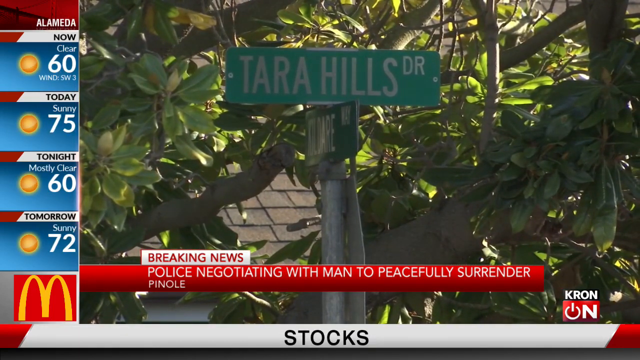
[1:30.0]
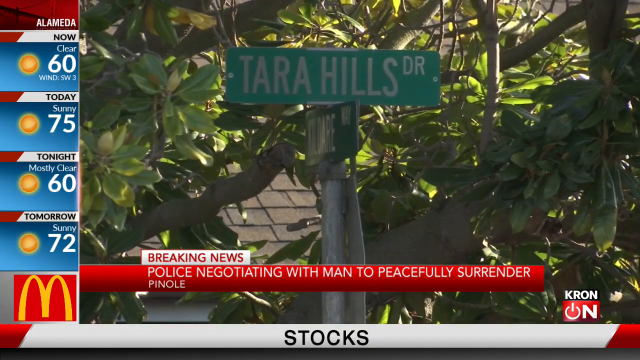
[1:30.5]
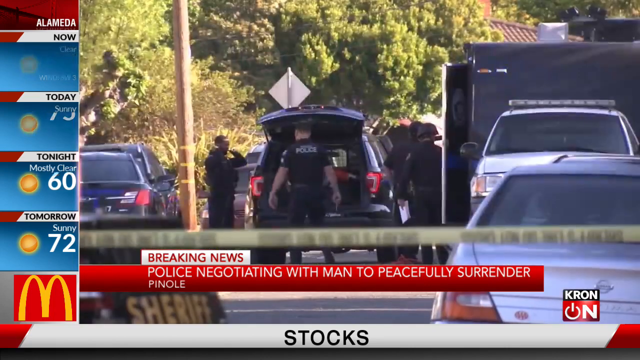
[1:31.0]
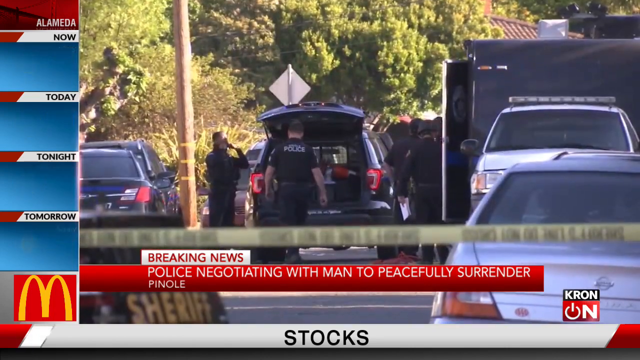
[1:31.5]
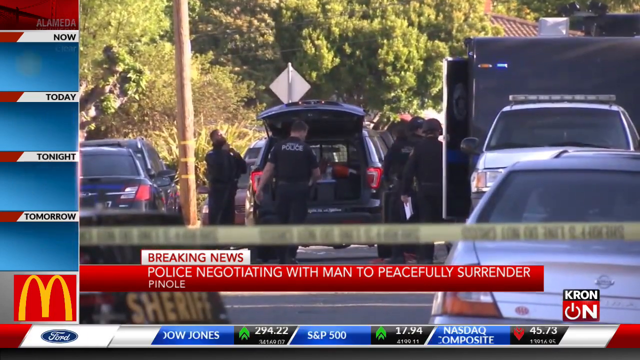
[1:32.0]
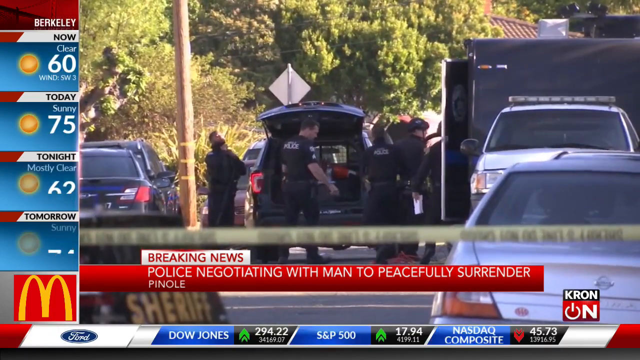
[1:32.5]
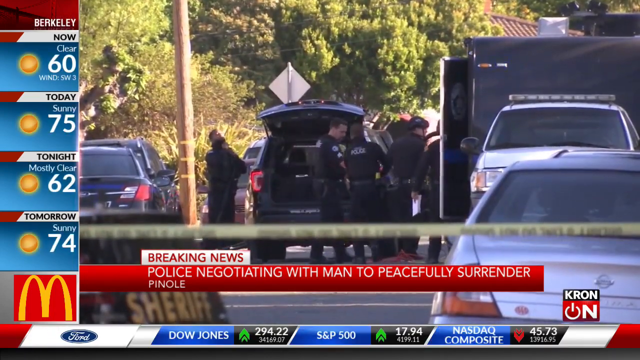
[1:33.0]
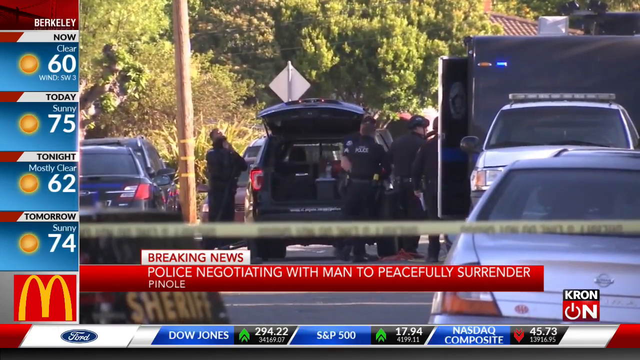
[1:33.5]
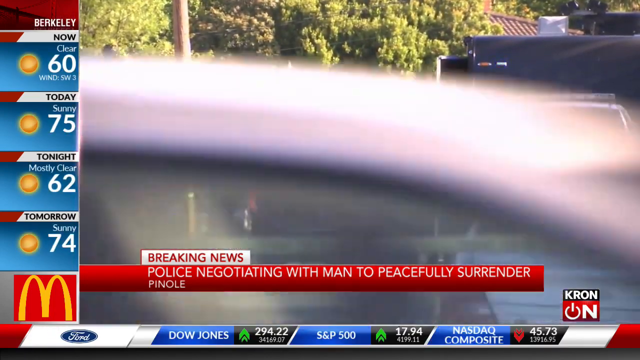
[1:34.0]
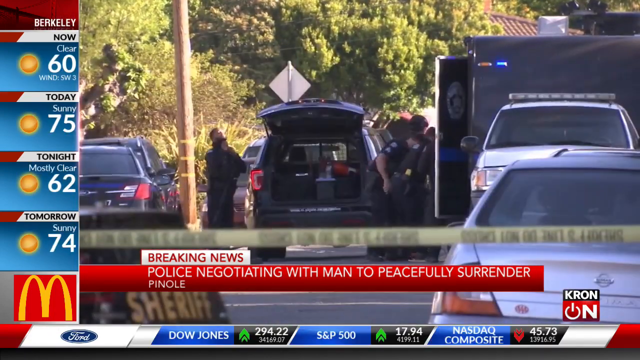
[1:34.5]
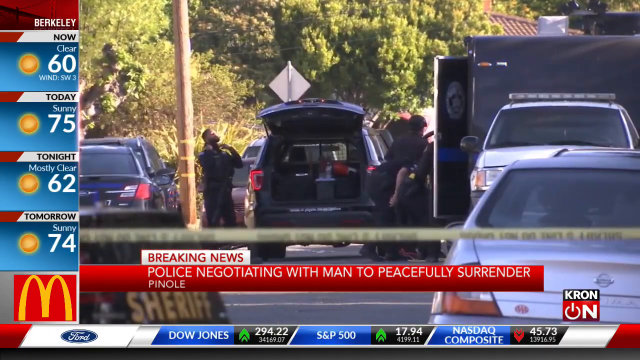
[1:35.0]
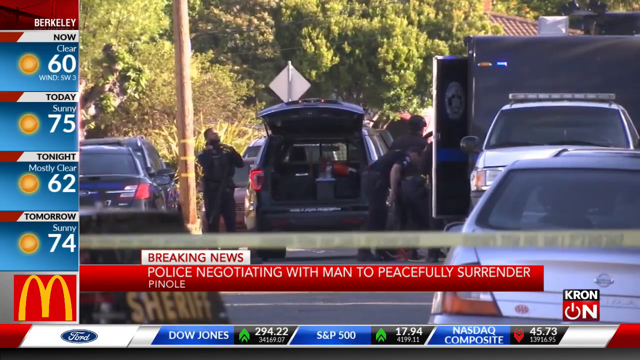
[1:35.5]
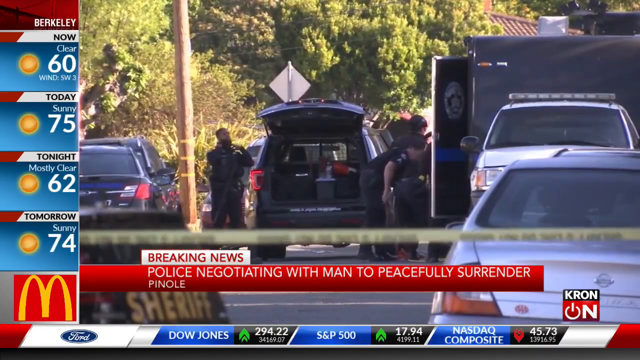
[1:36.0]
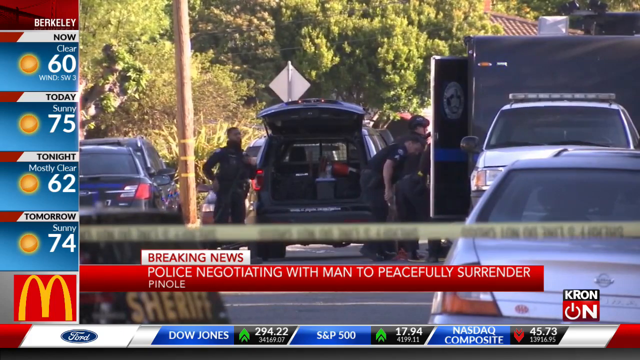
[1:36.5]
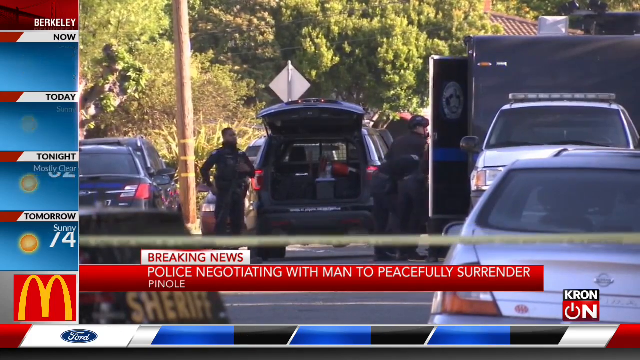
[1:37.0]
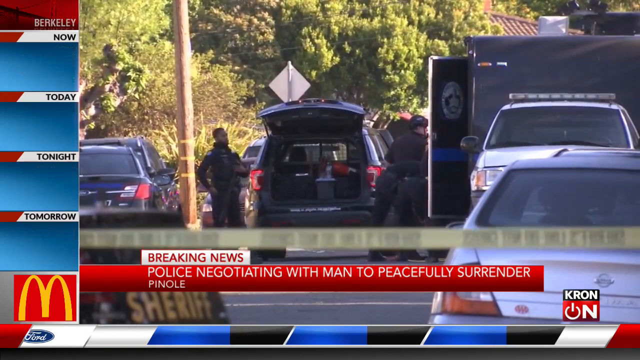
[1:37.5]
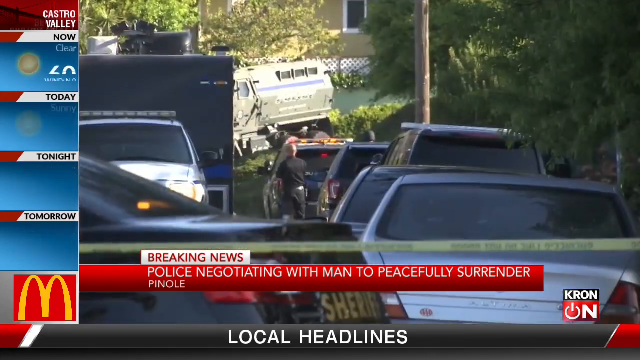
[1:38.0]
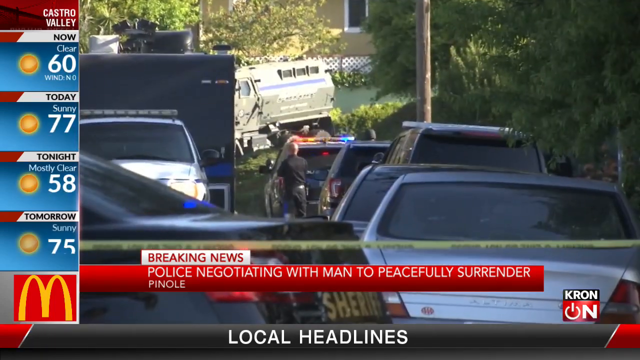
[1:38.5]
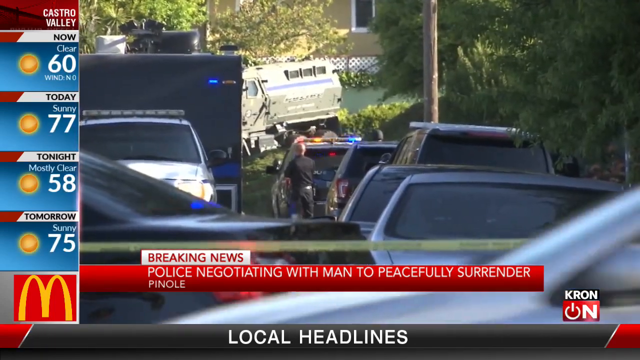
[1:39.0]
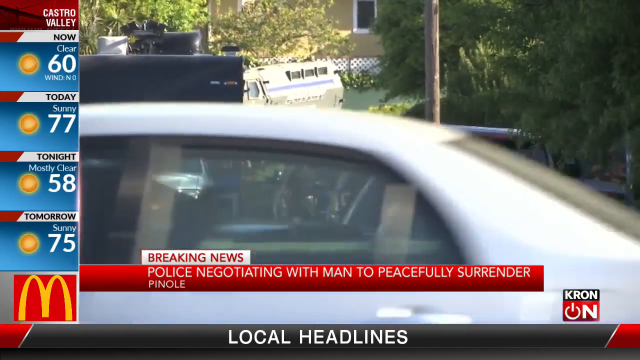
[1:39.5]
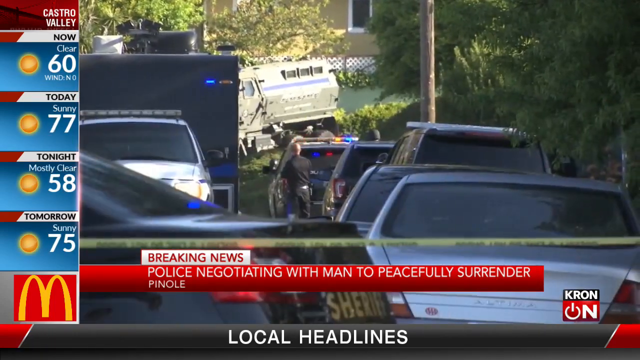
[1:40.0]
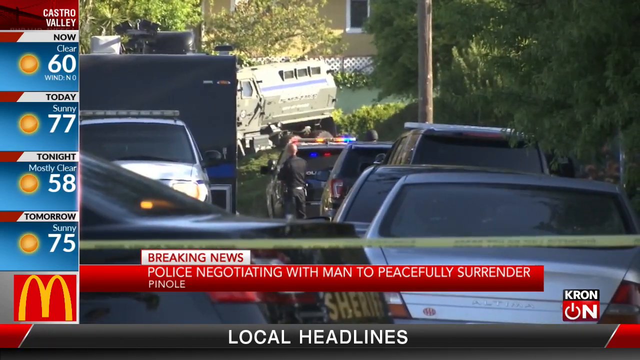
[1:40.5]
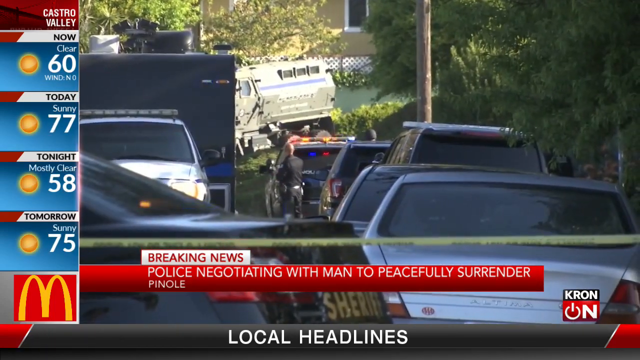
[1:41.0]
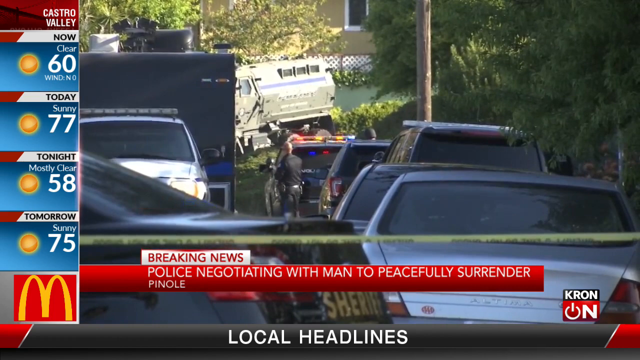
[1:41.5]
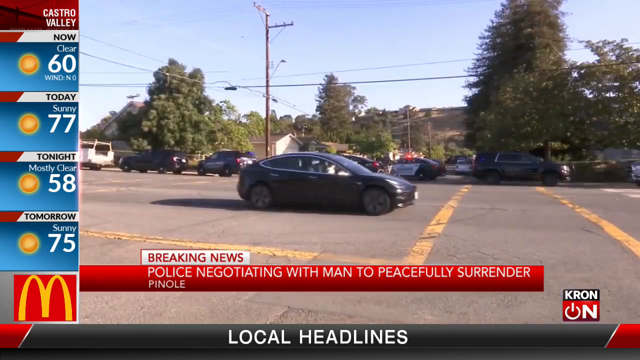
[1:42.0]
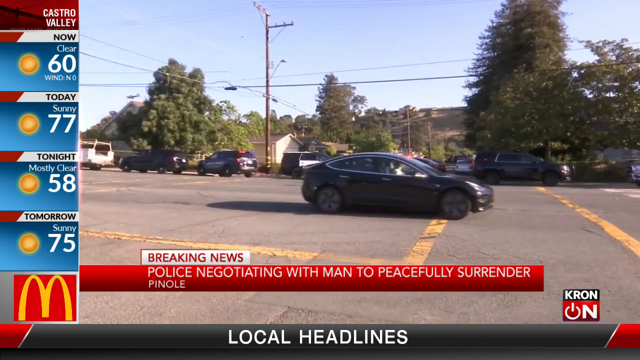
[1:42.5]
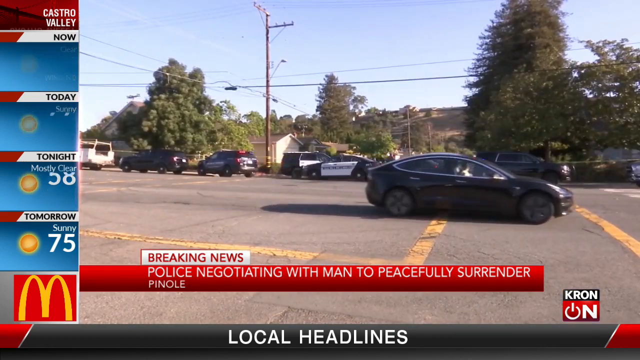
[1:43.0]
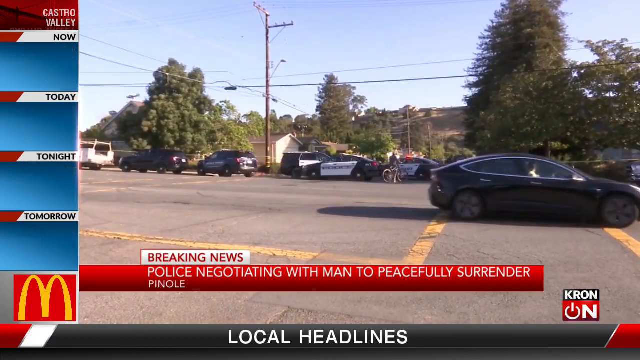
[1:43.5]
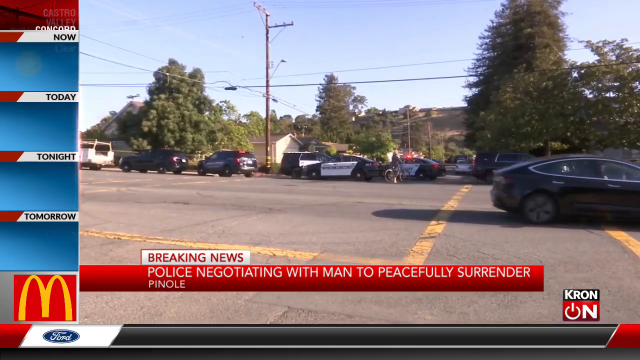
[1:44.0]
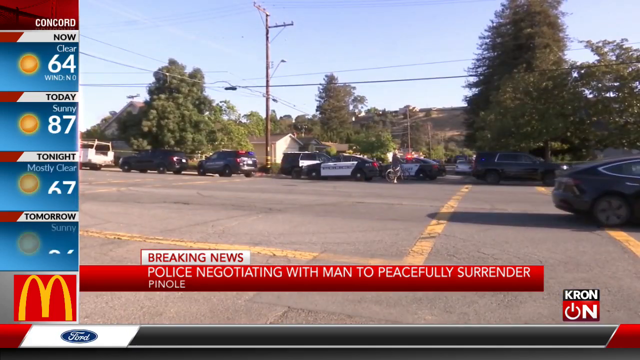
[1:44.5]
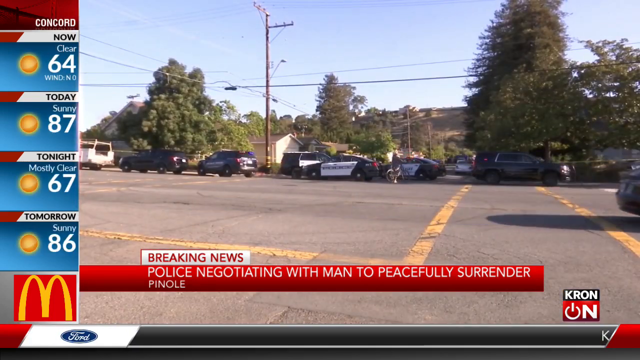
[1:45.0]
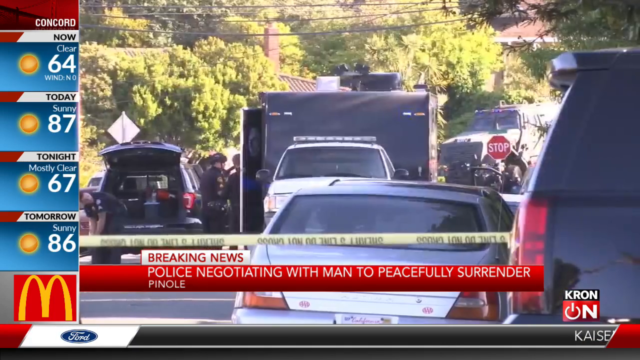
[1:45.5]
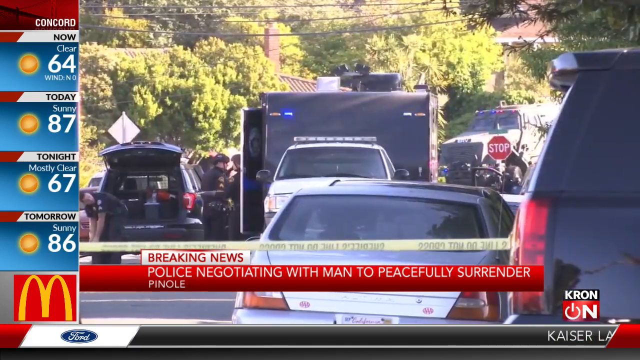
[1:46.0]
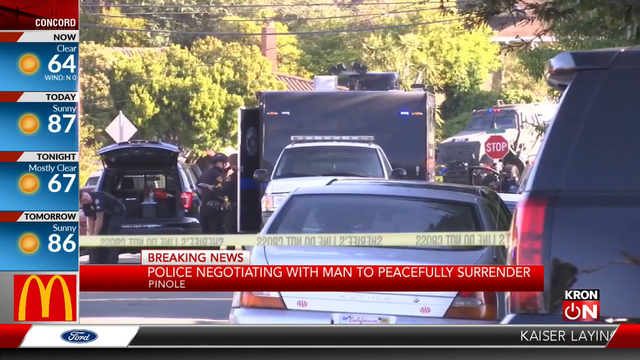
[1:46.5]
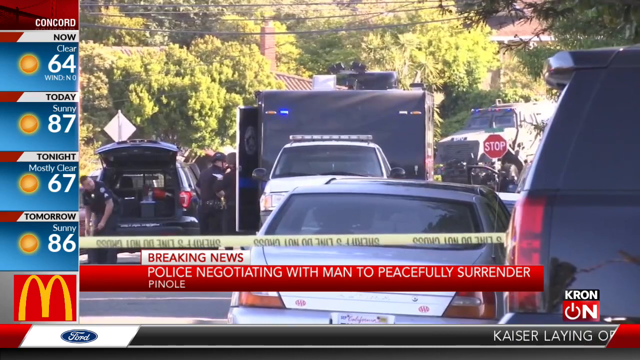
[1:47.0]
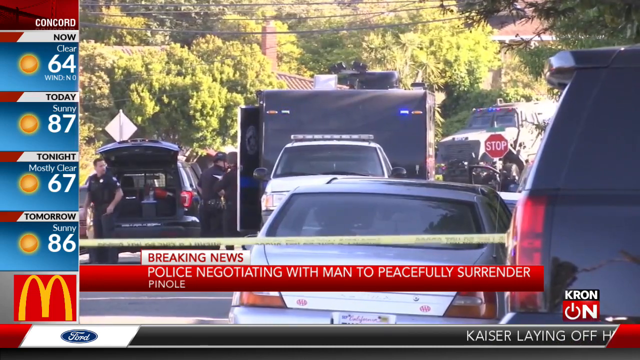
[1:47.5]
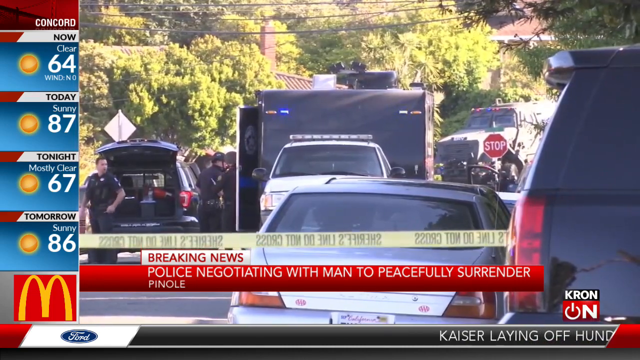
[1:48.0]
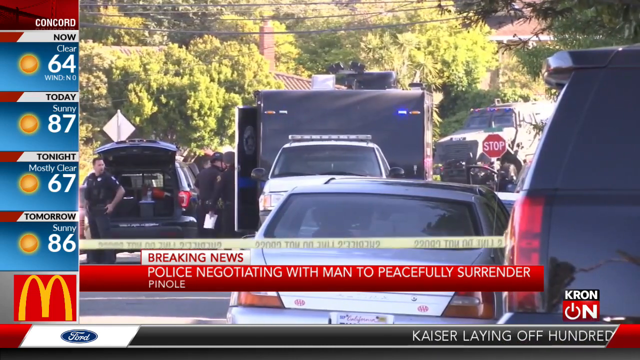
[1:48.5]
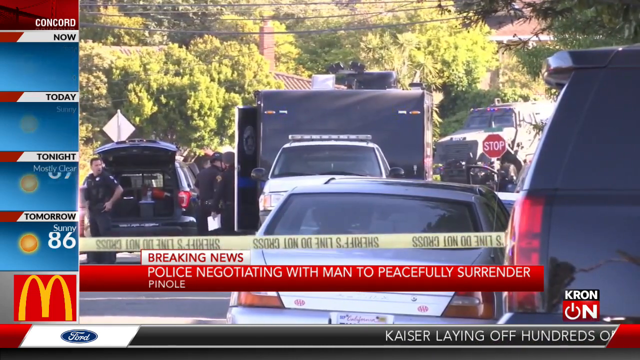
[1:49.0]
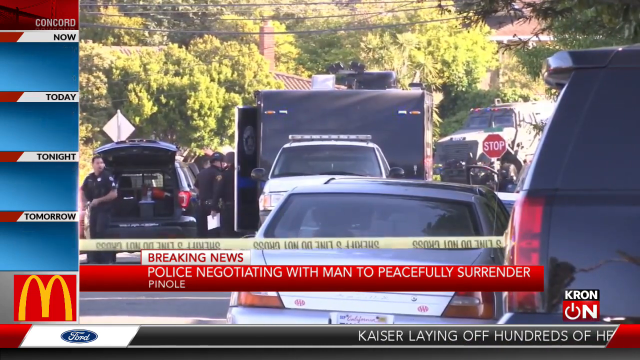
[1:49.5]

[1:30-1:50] The shot starts on the street identification, then the image moves to where the police cars are, showing some movement from policemen. Another camera view shows one policeman looking around in the middle of the cars. Another view shows the street where the reporter initially is, as a car passes by, followed by different images. Another shot shows police around their cars, moving slowly and talking to each other. The red bar with white letters still identifies the situation, police negotiating with men to peacefully surrender in Pinole, with the breaking news sign on top of it, and the station is still identified as Kron. On the left side of the image, the column shows the weather in Alameda.